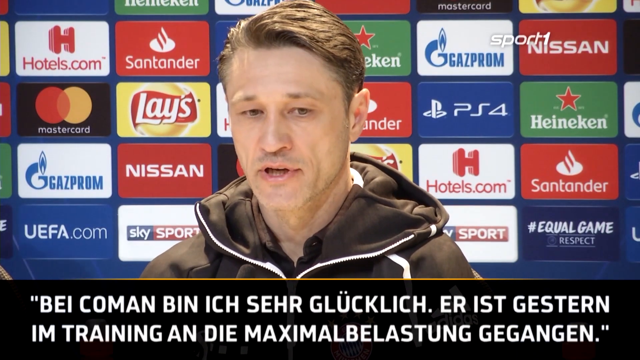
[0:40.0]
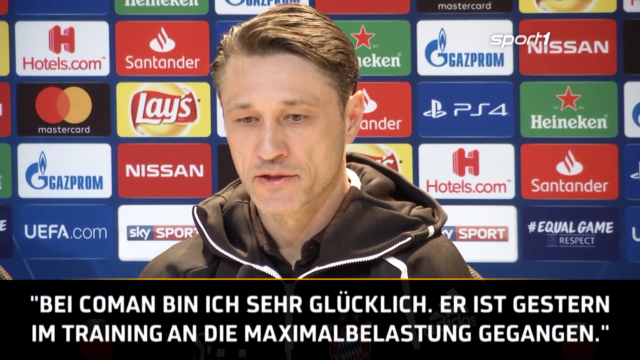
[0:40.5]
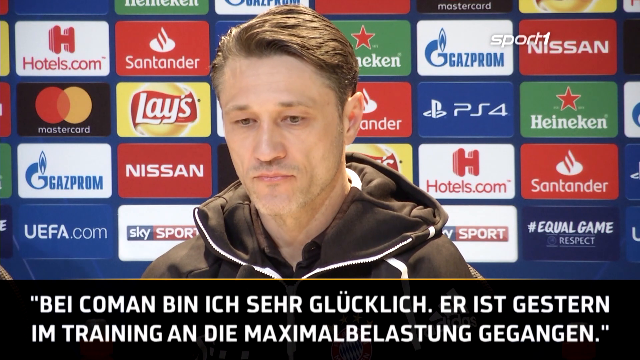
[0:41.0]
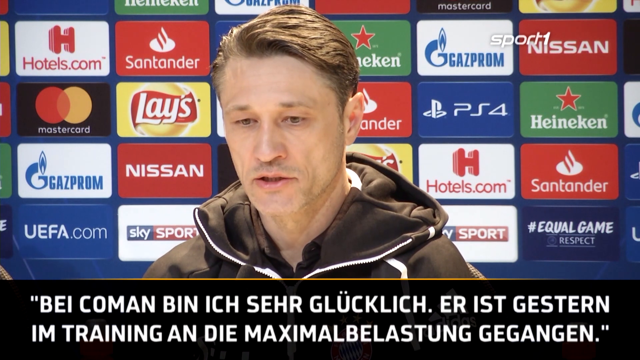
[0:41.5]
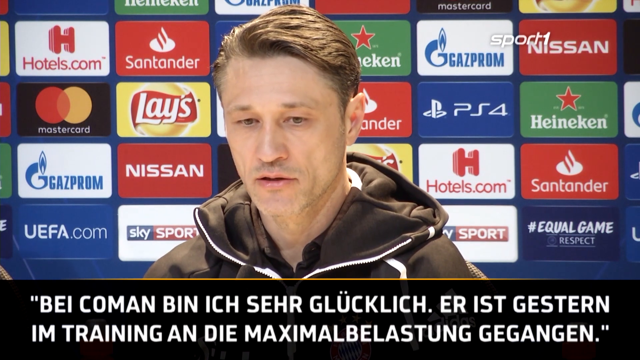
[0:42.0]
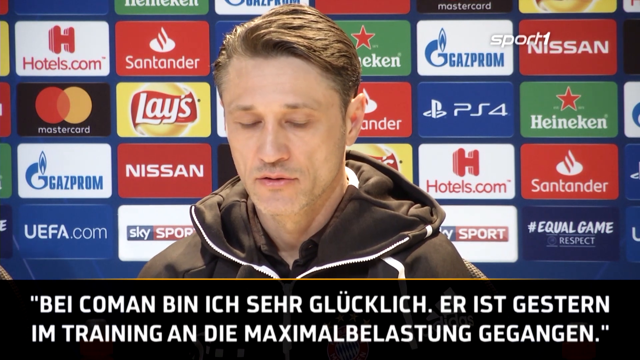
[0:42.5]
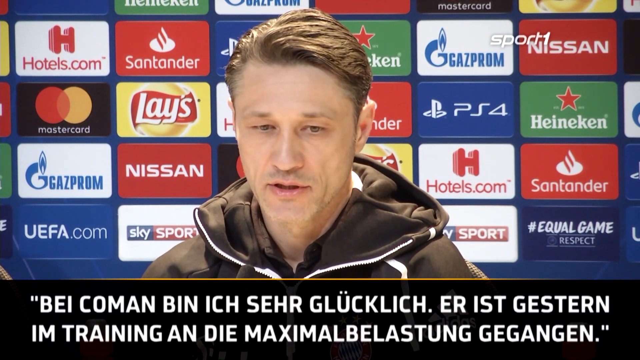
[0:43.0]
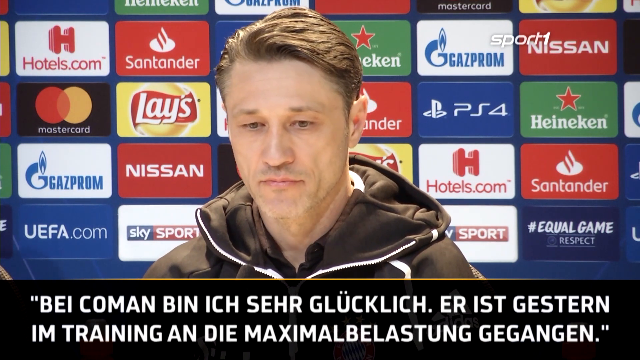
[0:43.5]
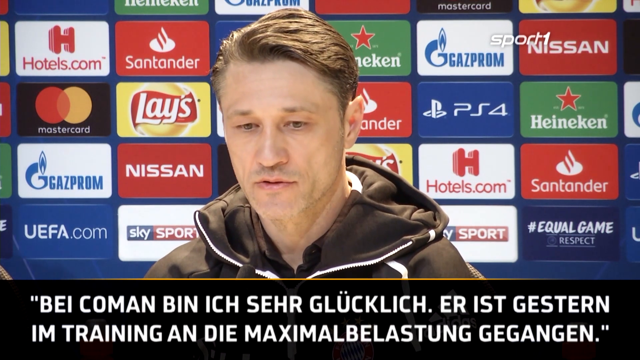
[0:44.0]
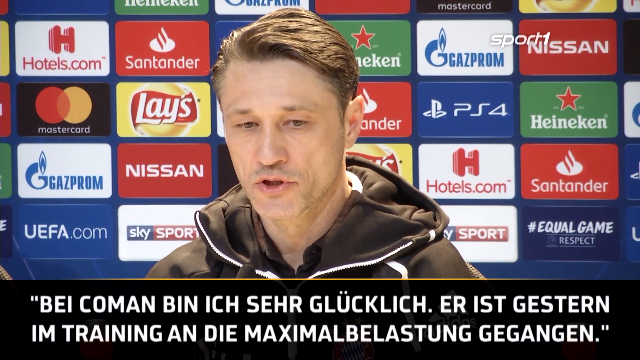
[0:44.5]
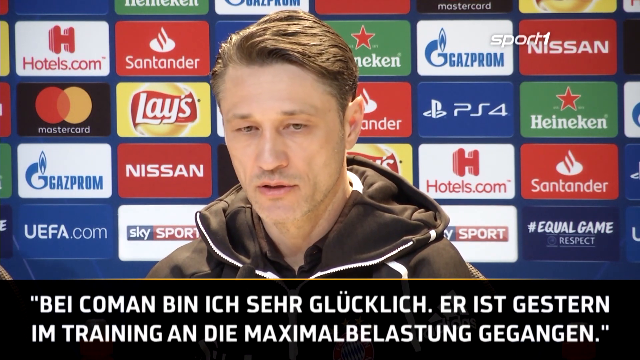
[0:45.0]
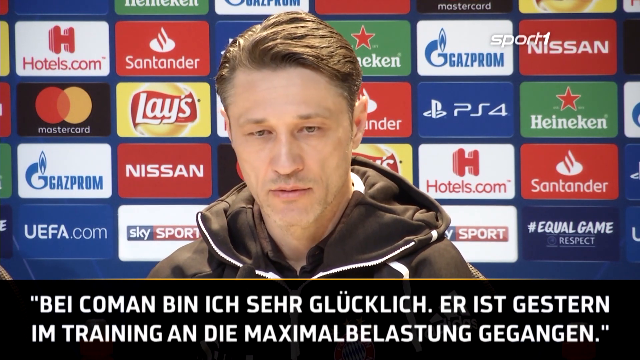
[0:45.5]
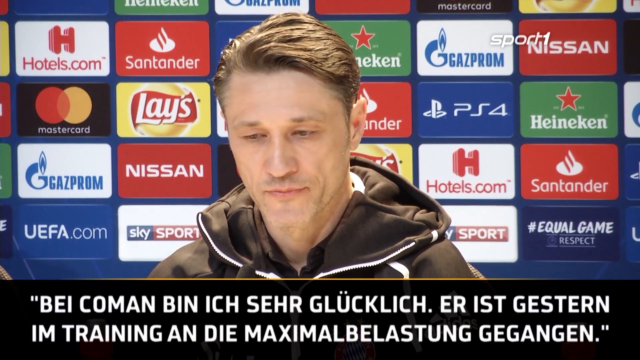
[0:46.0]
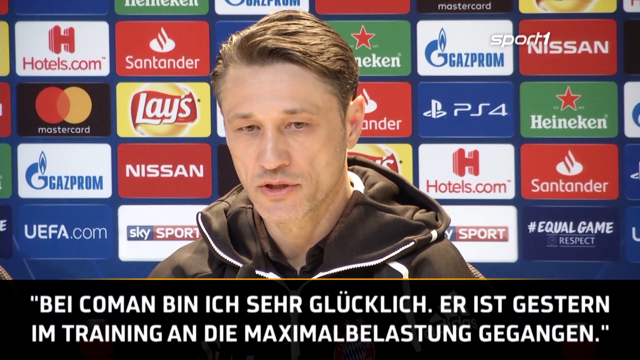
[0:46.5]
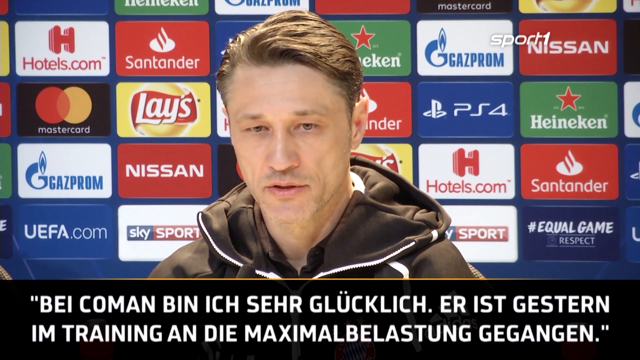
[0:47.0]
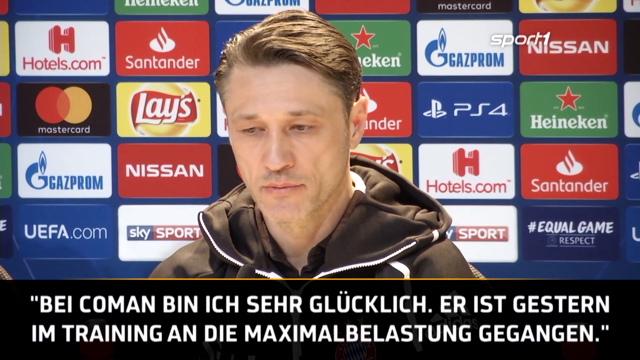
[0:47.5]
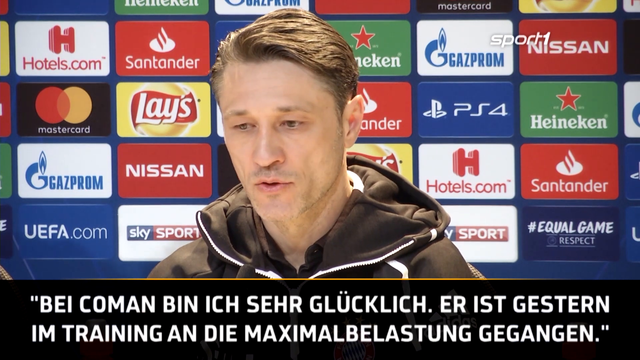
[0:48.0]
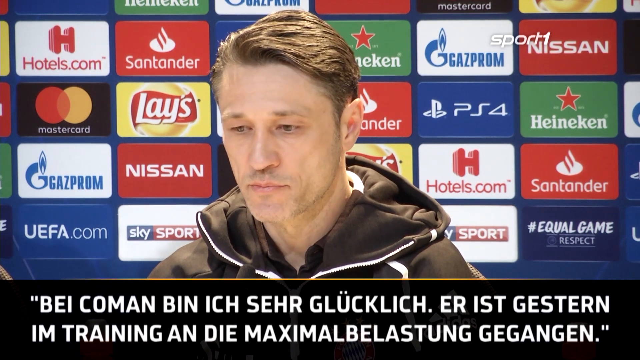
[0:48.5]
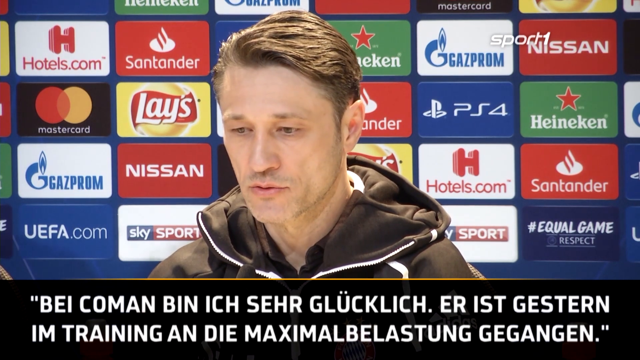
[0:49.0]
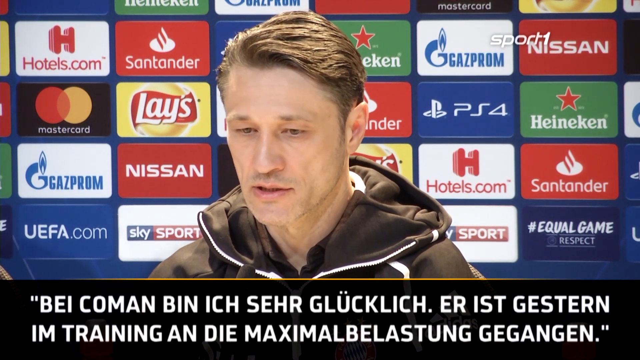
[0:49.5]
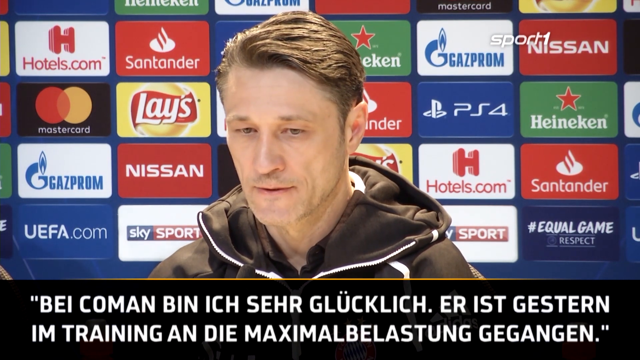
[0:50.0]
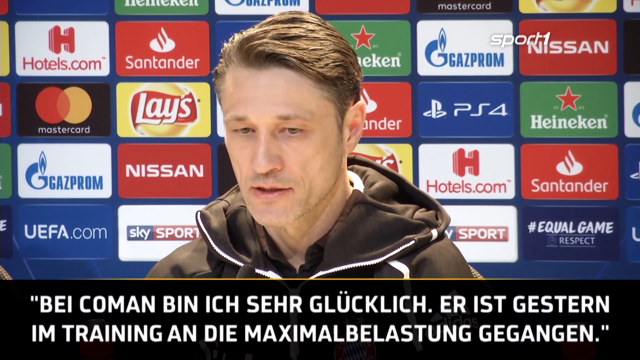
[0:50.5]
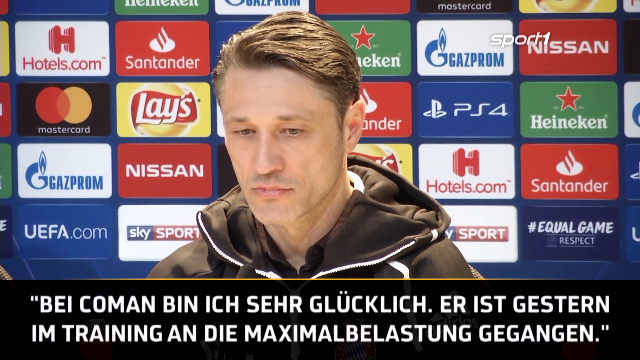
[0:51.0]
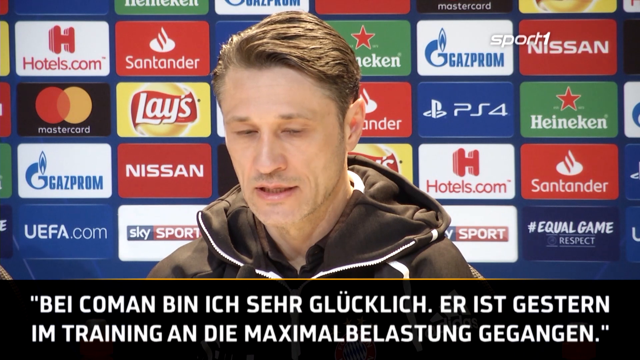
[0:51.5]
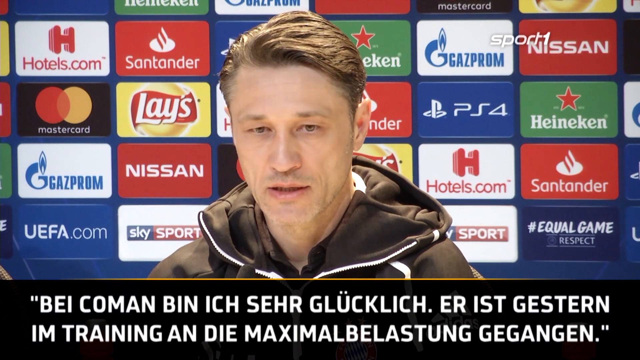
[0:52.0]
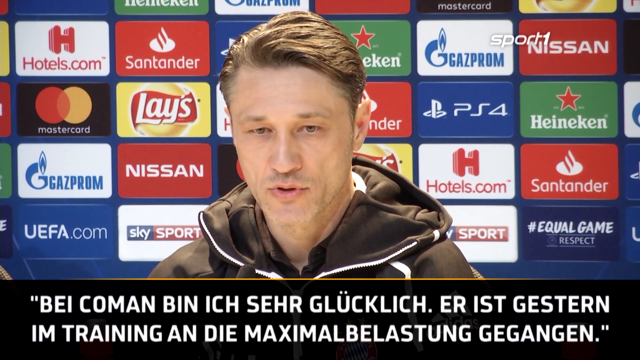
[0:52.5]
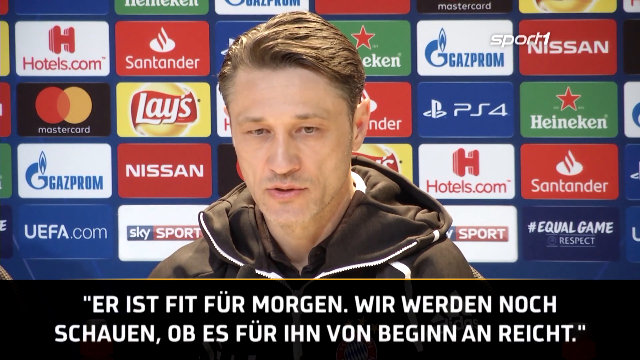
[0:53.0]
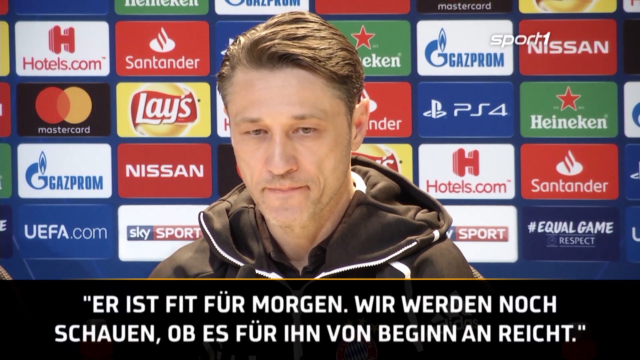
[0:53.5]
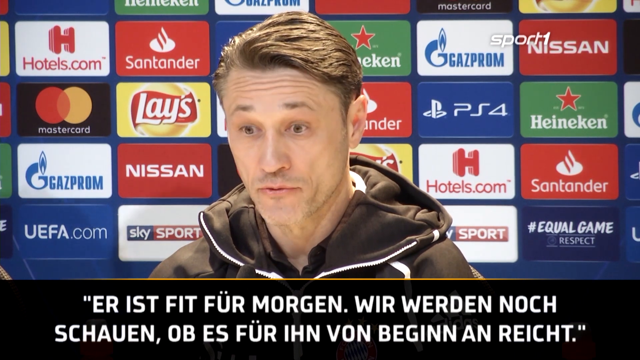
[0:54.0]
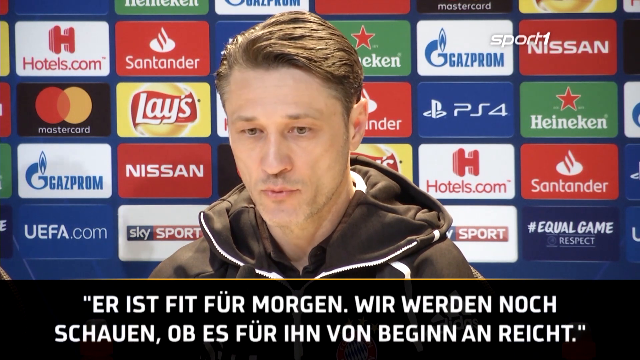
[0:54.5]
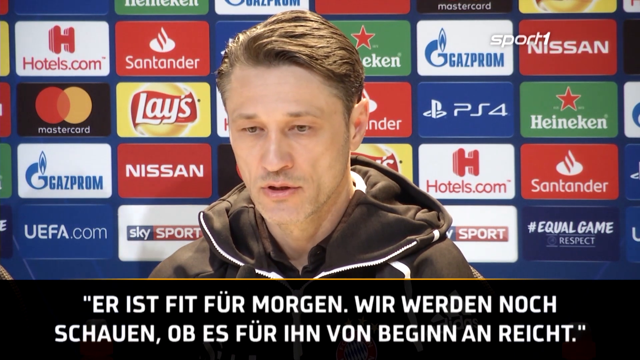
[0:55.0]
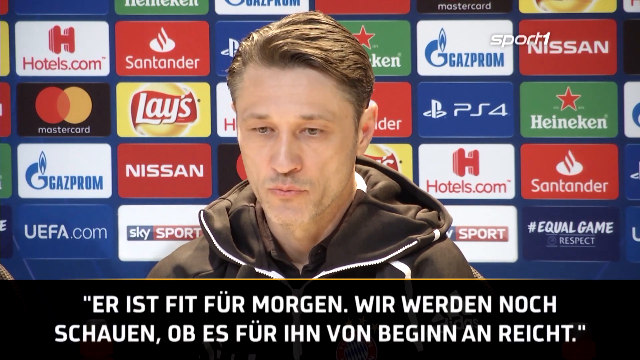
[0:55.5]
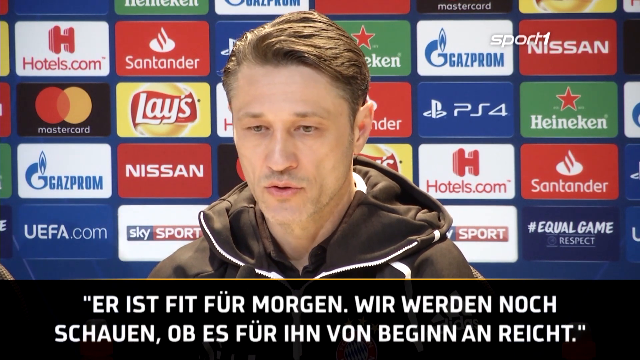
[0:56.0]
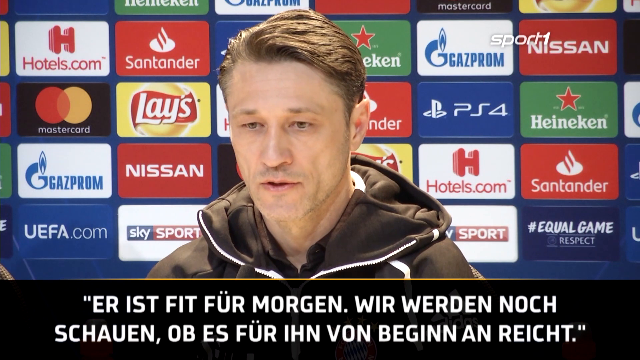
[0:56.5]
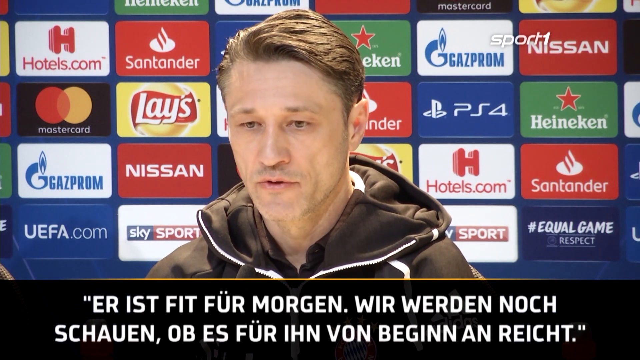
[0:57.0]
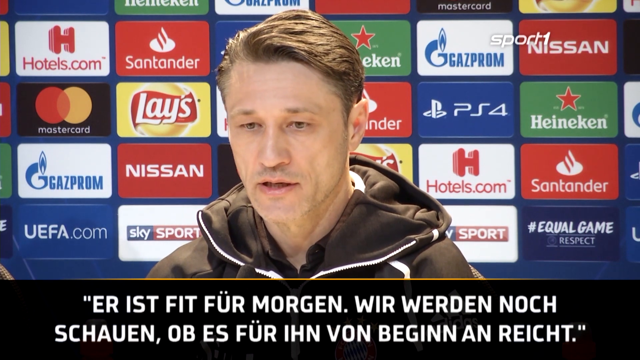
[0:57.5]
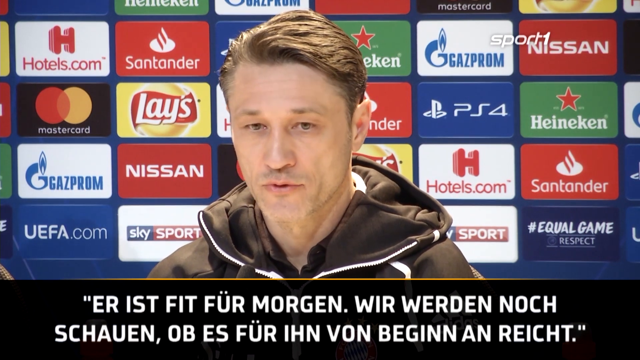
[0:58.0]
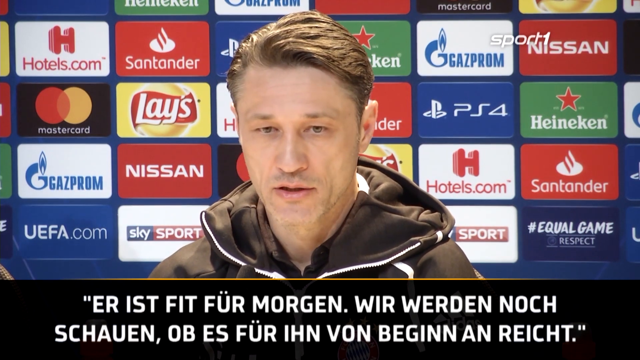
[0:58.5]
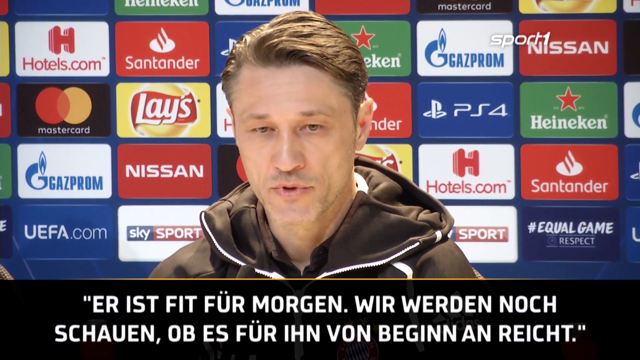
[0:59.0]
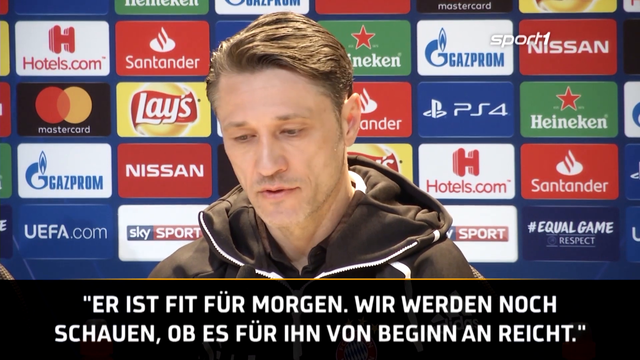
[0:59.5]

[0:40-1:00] A man in a black tracksuit is sitting down and answering questions in what appears to be a press conference before or after a soccer game, broadcast on the Sport 1 channel. The blue background contains sponsorship rectangles for Heineken, Santander, Hotels.com, PS4, Gazprom, Blaze, Mastercard, Wayfa.com and Skysport. He seems to be answering a reporter's question, gazing down as he answers, and his eyebrows go up as he shows he is thinking; he seems to answer fluidly. The man has blonde brown hair, a large nose, thin ears and thin lips, and appears to be very in shape. German words appear at the bottom in quotation marks, changing according to what he is saying.